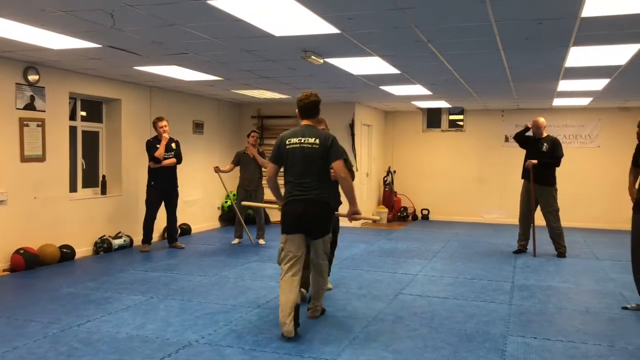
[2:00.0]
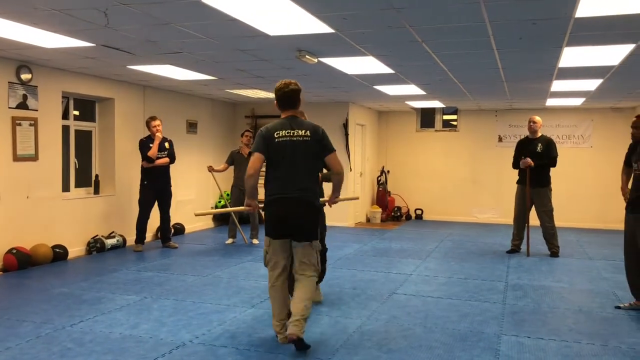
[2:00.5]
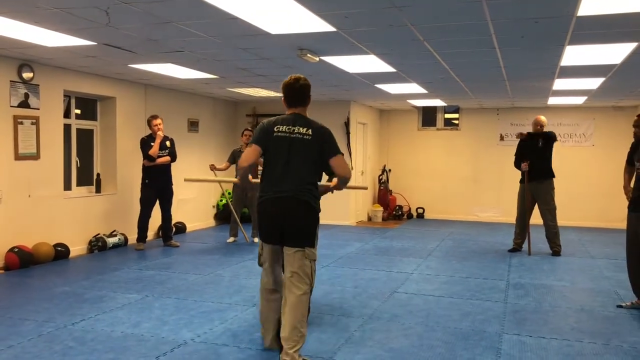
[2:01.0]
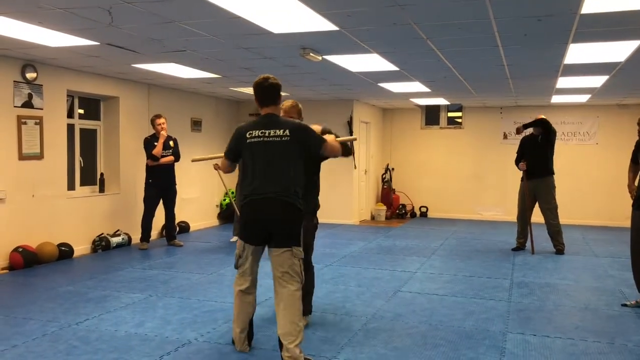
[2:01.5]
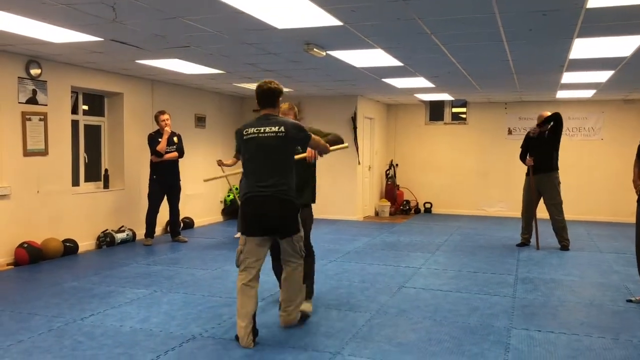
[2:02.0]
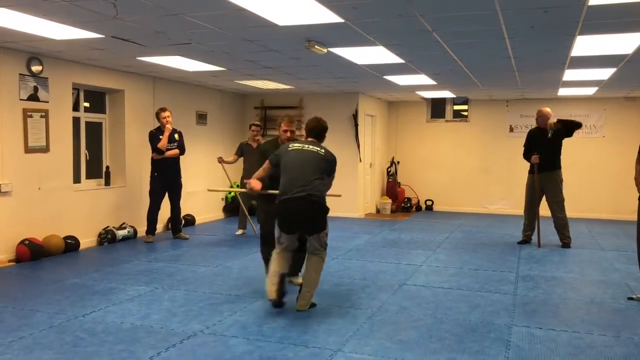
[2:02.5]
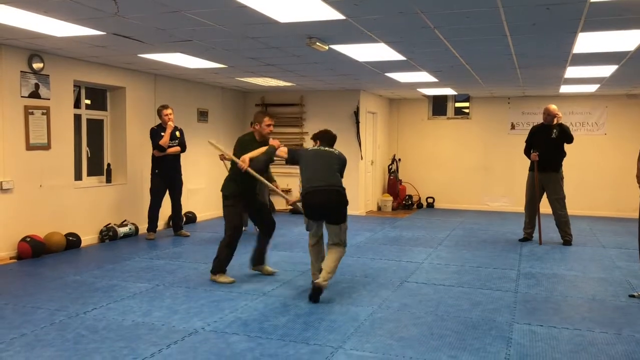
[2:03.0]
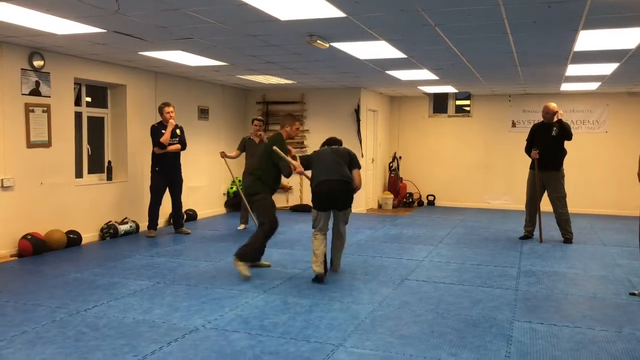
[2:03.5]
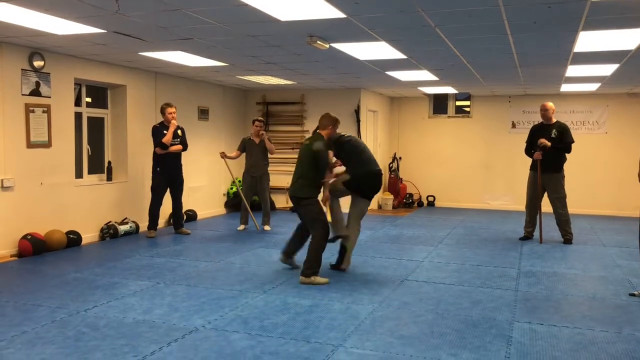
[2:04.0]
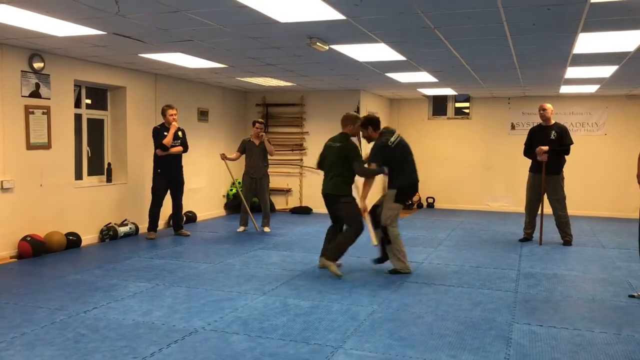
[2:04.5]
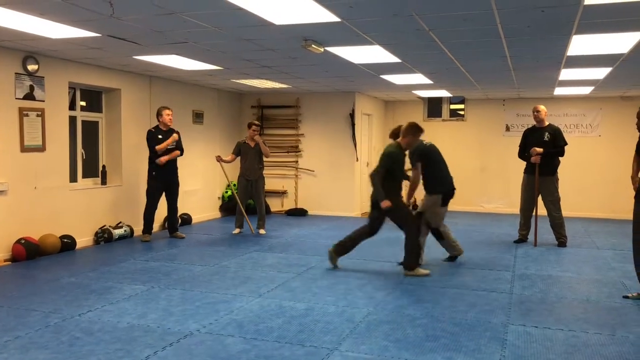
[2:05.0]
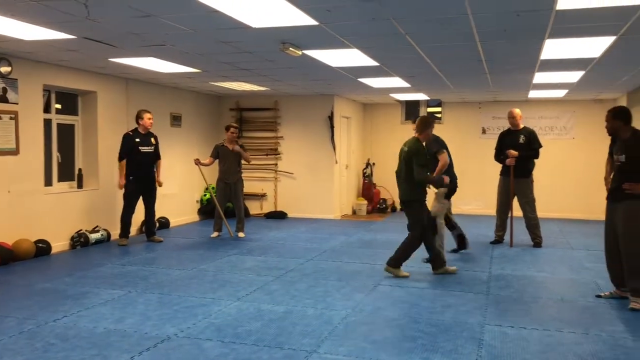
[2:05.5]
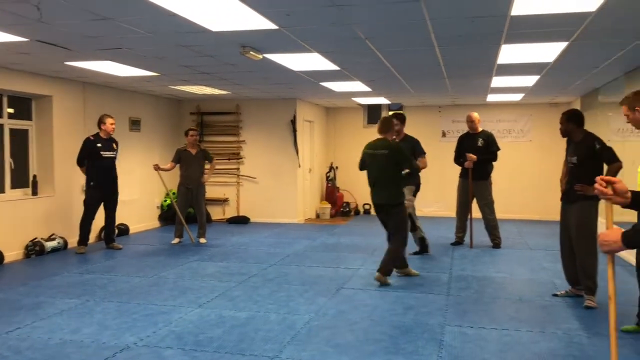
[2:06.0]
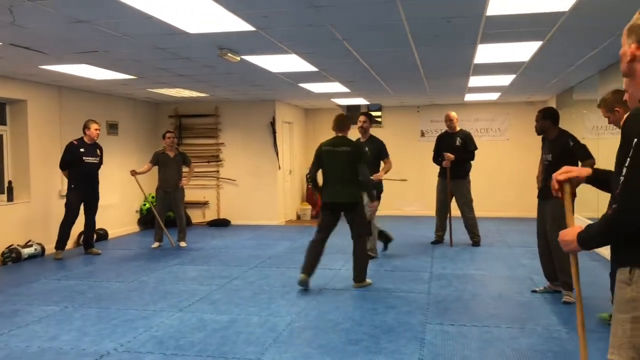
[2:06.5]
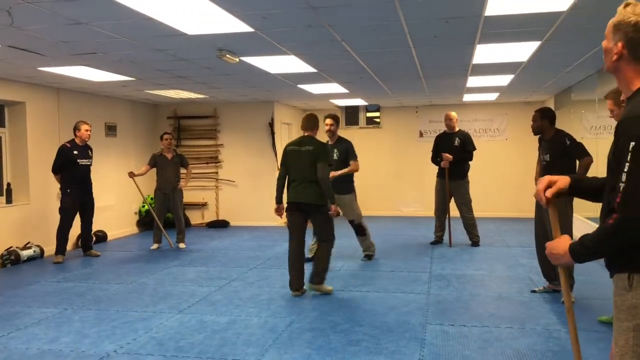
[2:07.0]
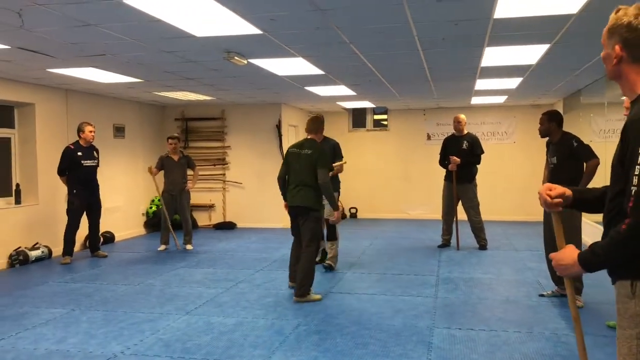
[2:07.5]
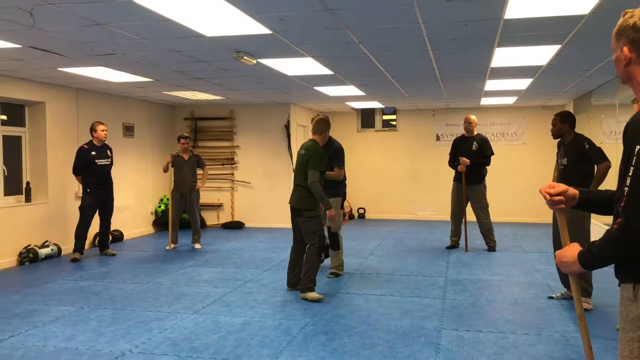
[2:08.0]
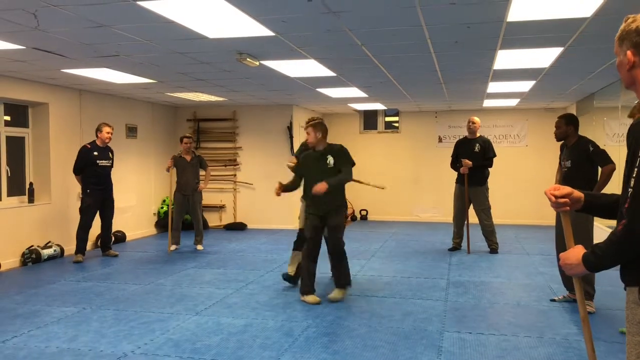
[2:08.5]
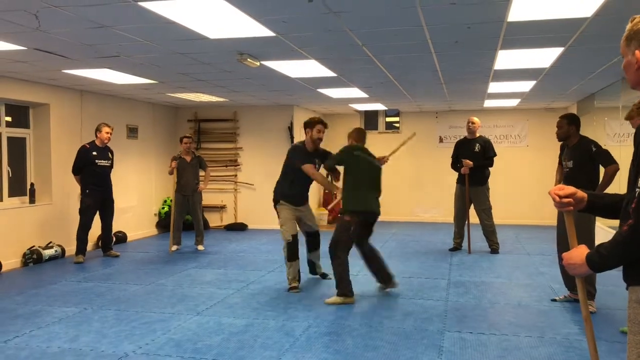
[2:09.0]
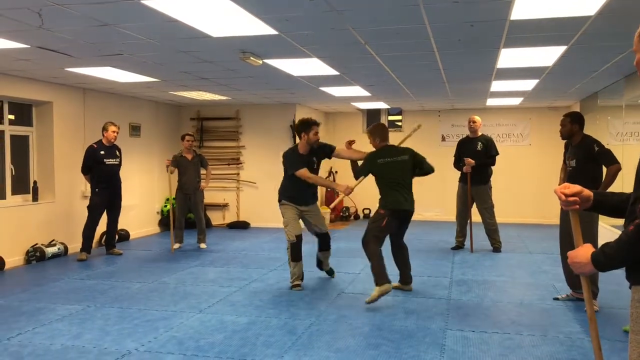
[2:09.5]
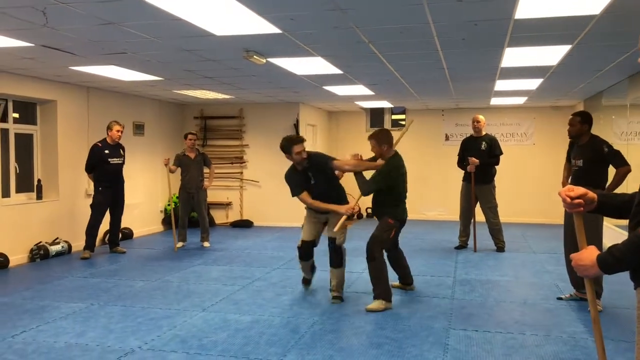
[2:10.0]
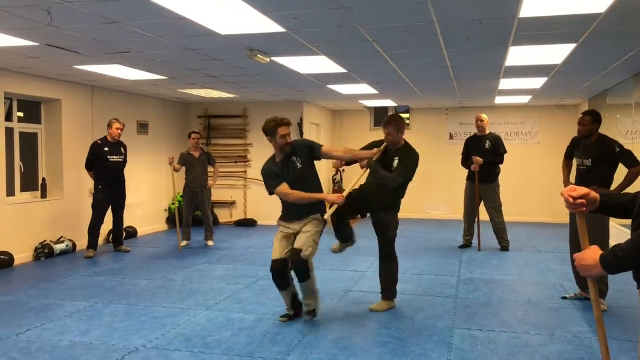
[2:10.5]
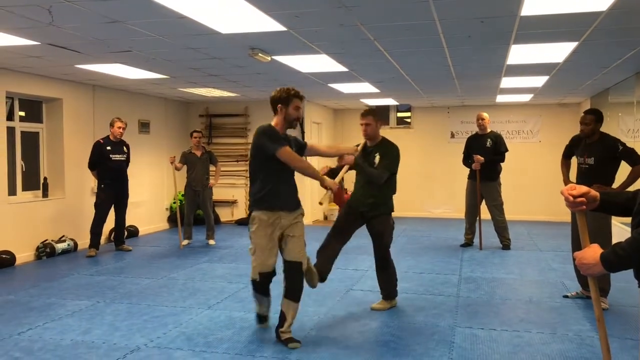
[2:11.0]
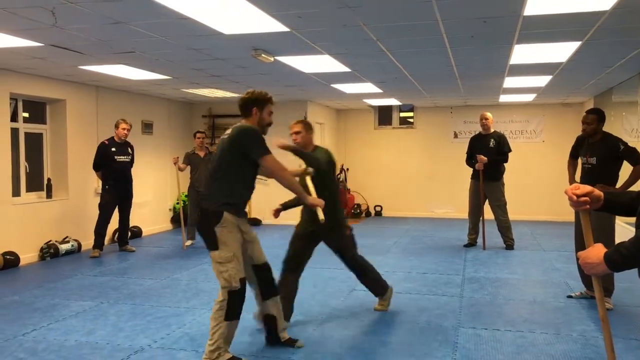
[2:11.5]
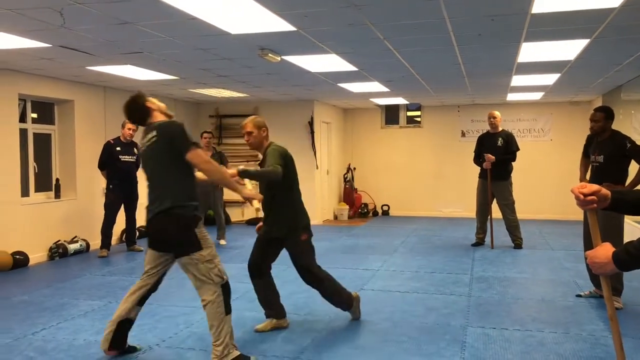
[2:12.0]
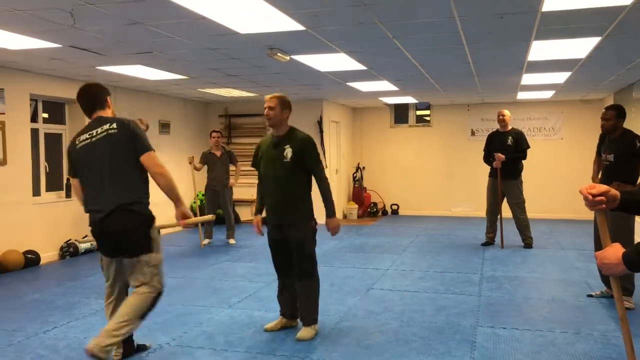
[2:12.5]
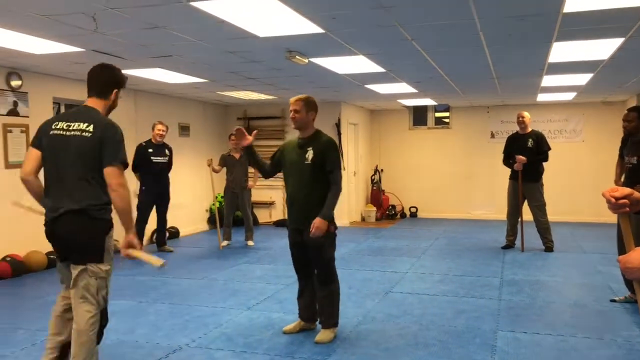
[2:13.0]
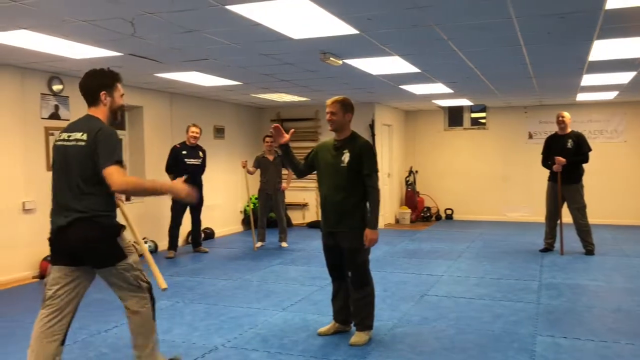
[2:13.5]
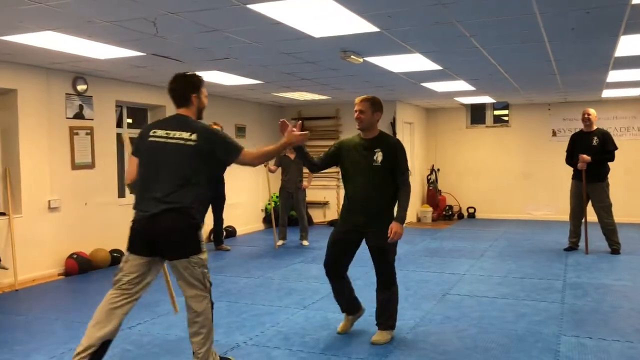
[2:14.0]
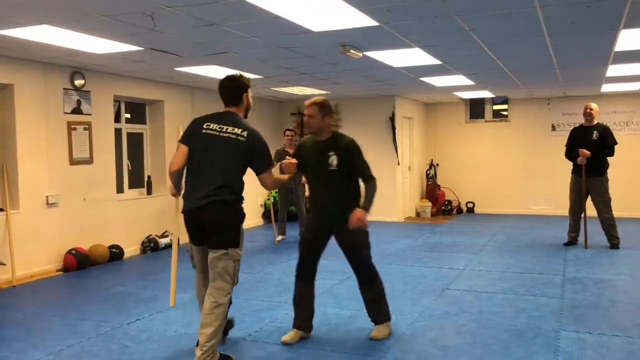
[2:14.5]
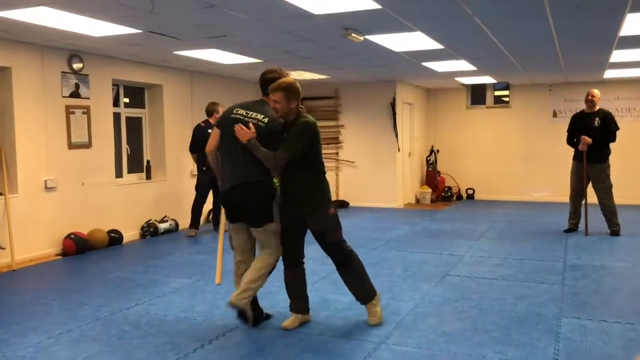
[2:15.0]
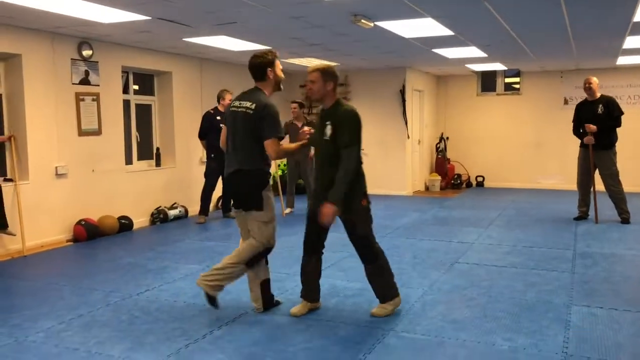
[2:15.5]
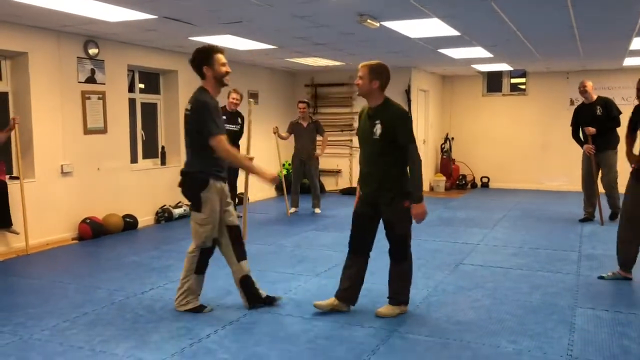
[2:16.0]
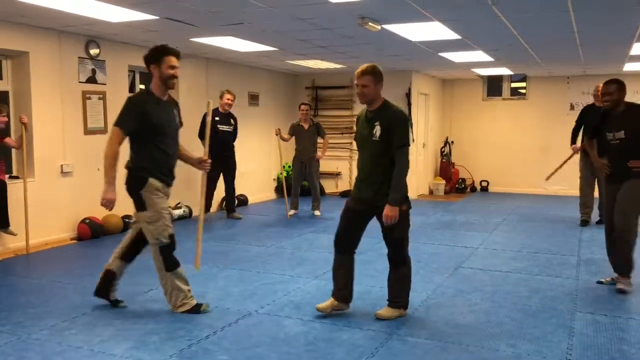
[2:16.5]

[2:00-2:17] The student backs away with his back toward the camera, holding the brown pole horizontally in both hands; the instructor faces the camera but is blocked by the student's back. The student pushes the pole horizontally toward the instructor, who grabs it, and both hold onto the pole. The instructor loops his right arm under the student's left arm and attempts to disarm the student, then throws some fake punches to the student's abdomen and side, backing the student up. The student holds onto the pole, and both stand up straight to reset, now with the instructor's back to the camera. The instructor spins to the right, loops his left arm under the student's left arm, and throws a kick at the student with his right leg. He then throws a fake punch to the student's face.